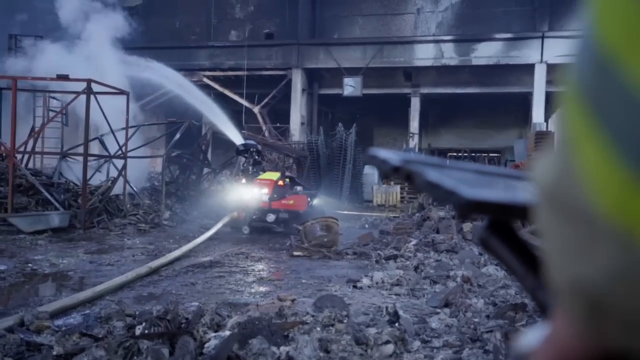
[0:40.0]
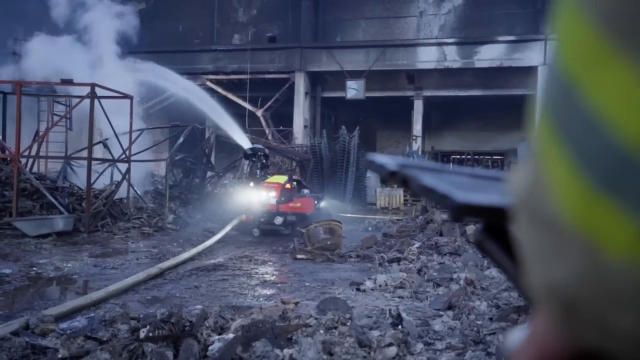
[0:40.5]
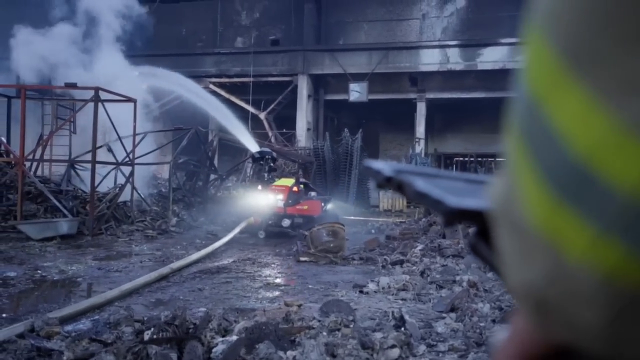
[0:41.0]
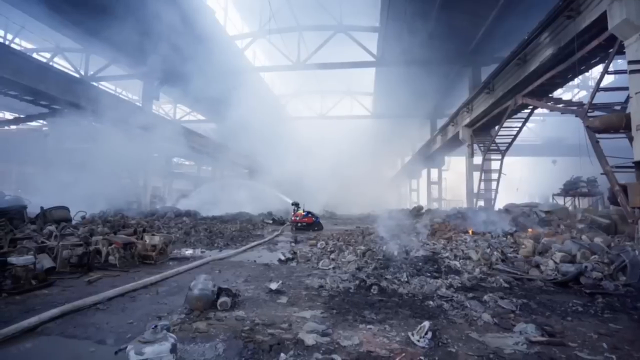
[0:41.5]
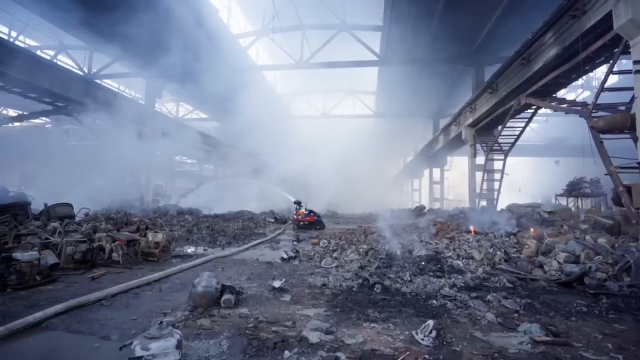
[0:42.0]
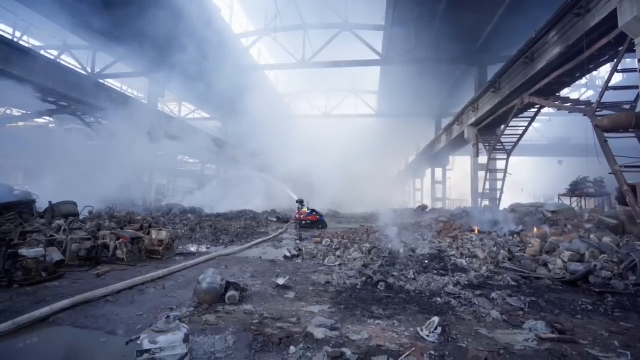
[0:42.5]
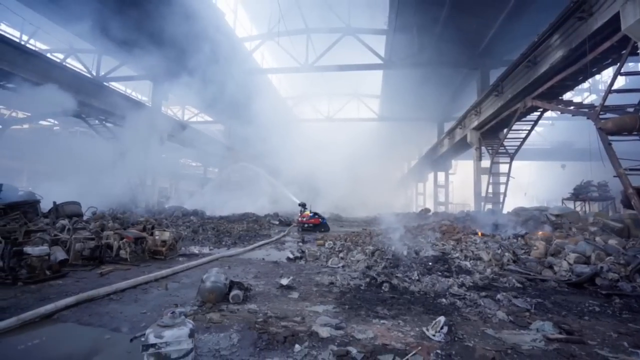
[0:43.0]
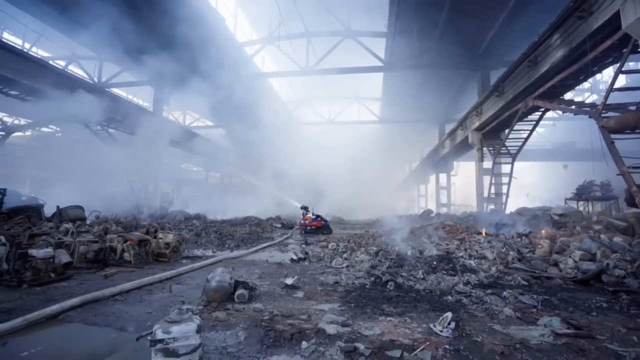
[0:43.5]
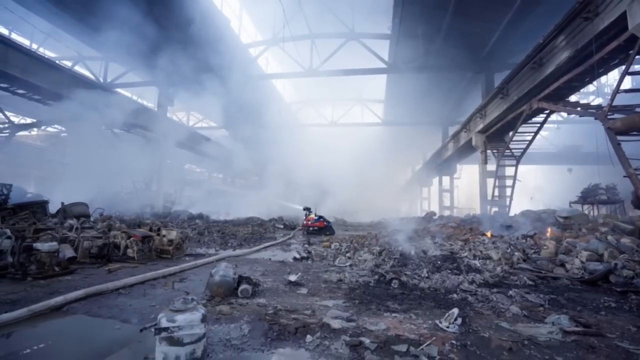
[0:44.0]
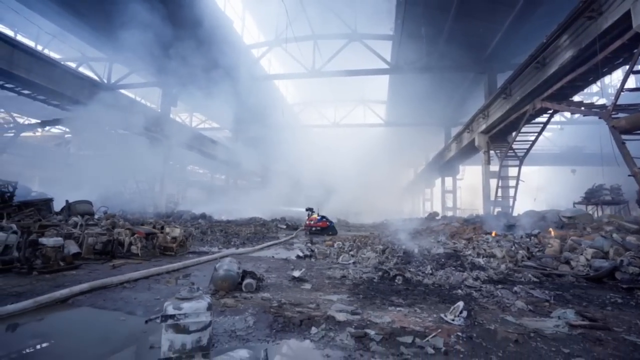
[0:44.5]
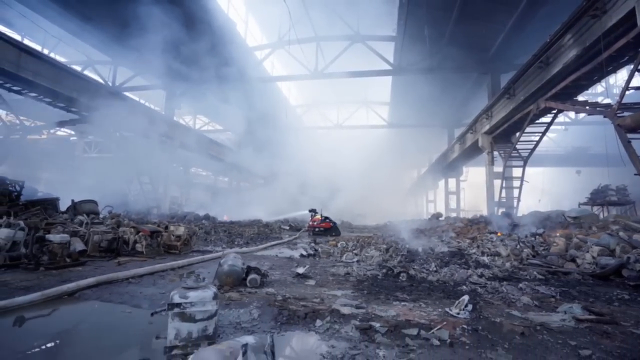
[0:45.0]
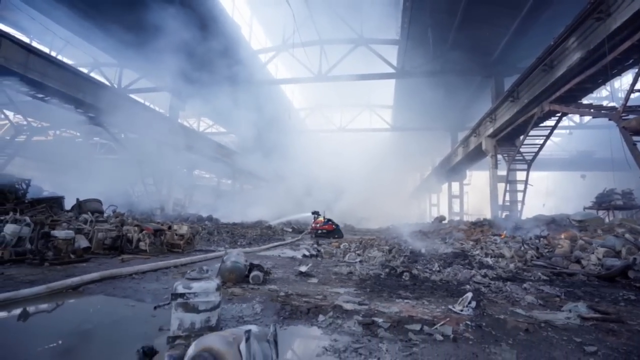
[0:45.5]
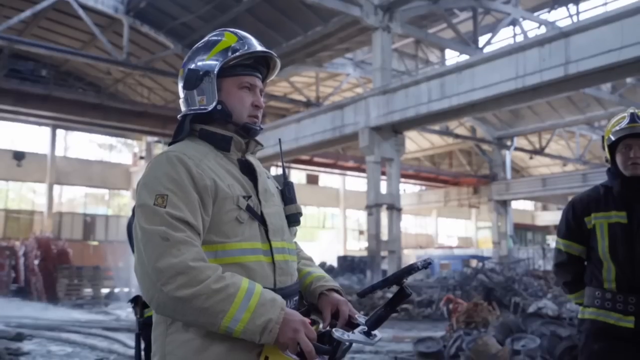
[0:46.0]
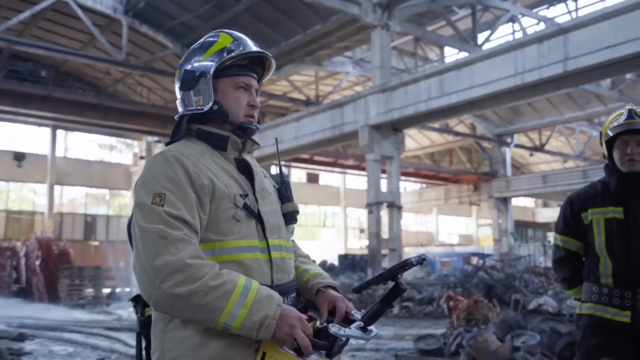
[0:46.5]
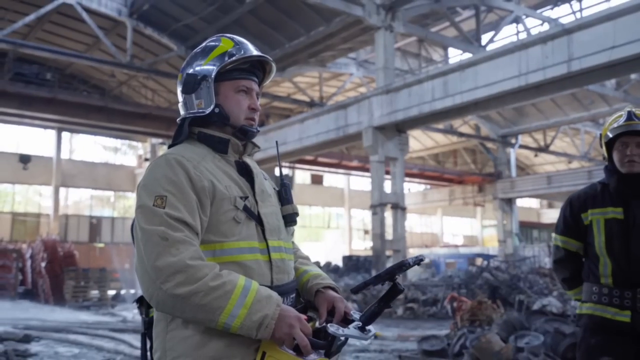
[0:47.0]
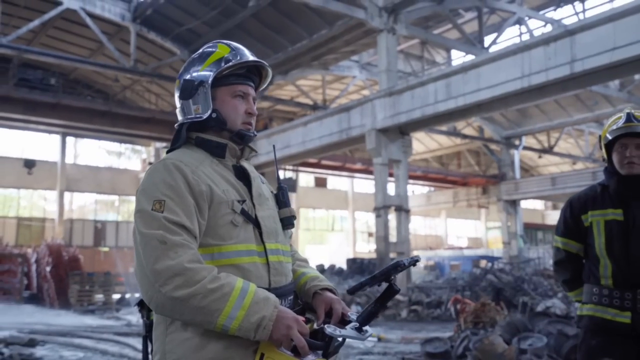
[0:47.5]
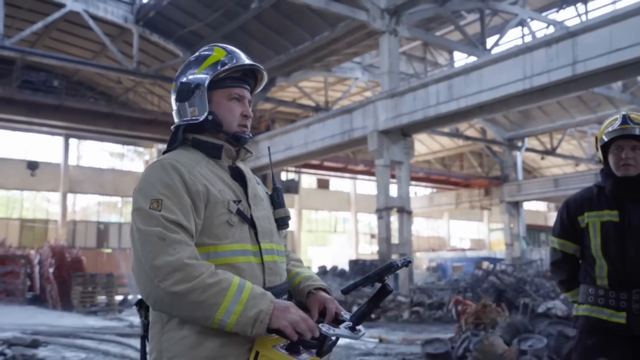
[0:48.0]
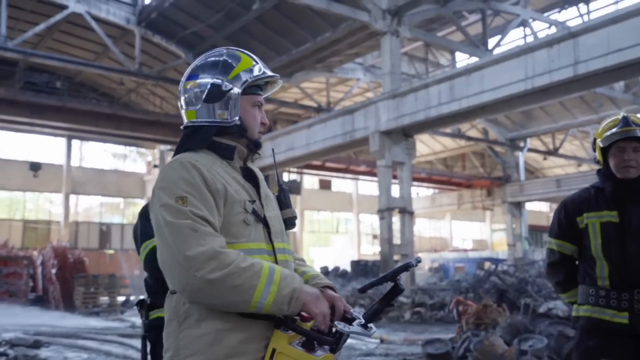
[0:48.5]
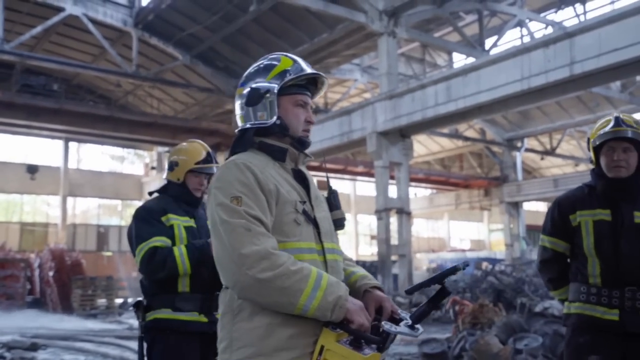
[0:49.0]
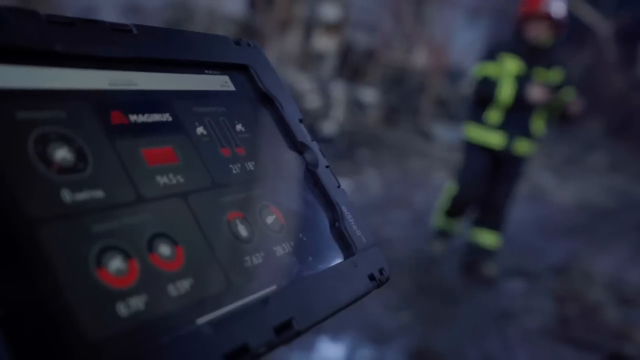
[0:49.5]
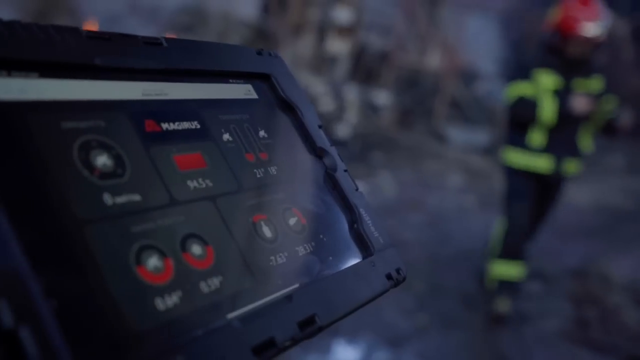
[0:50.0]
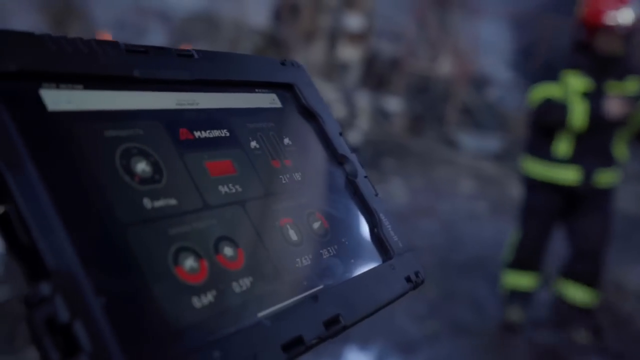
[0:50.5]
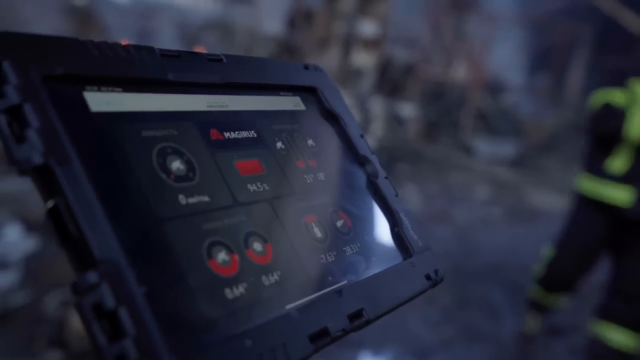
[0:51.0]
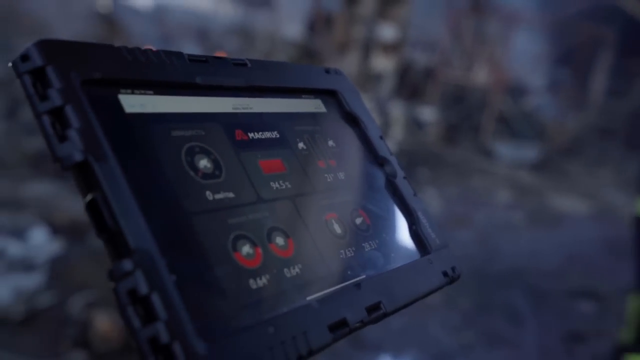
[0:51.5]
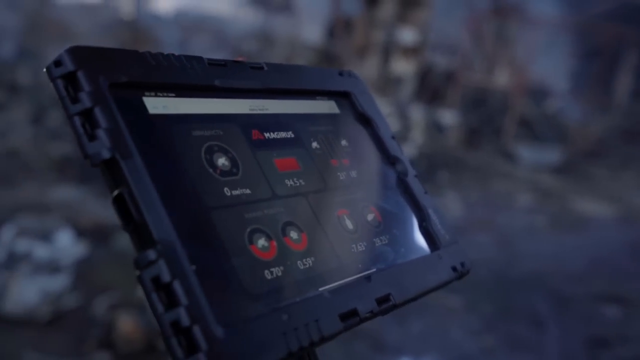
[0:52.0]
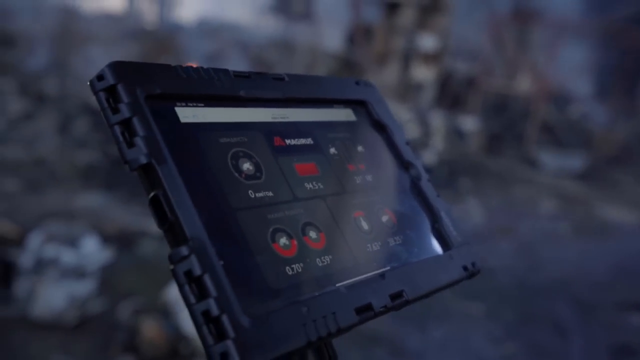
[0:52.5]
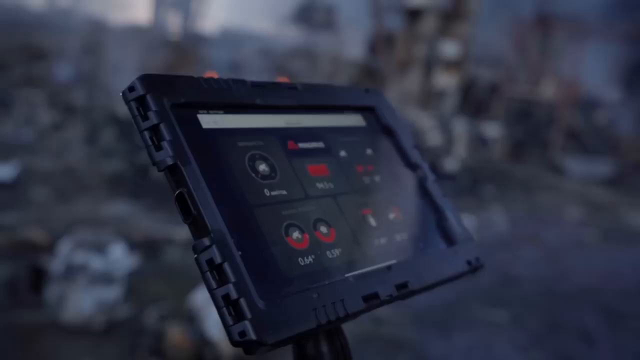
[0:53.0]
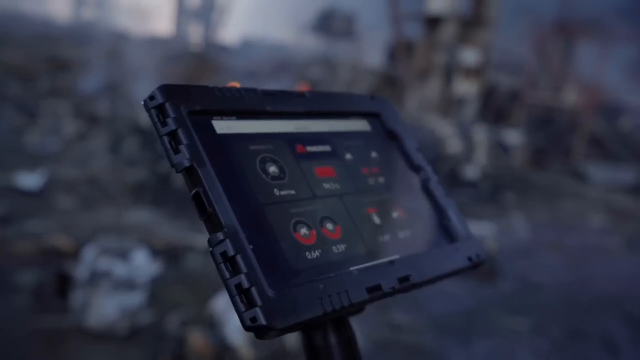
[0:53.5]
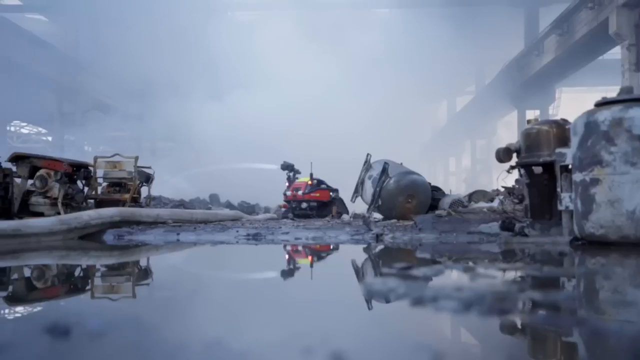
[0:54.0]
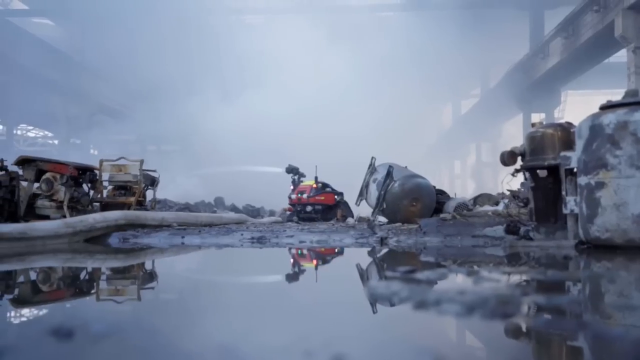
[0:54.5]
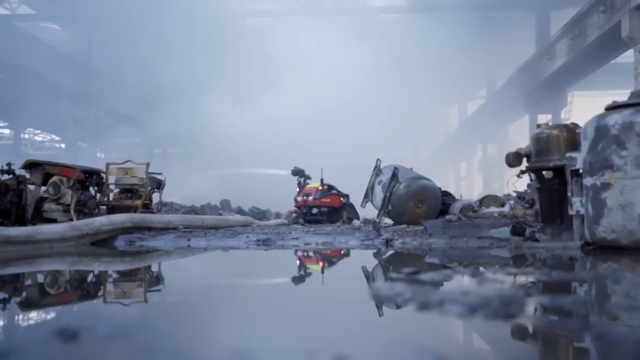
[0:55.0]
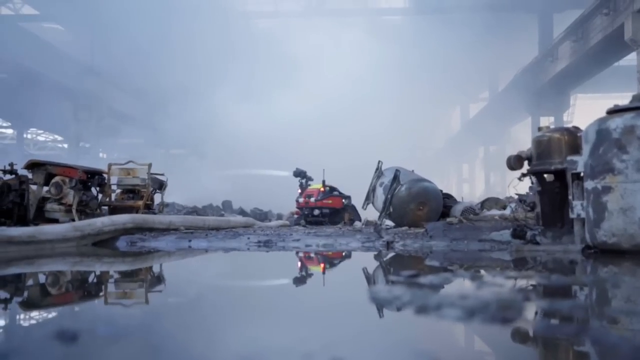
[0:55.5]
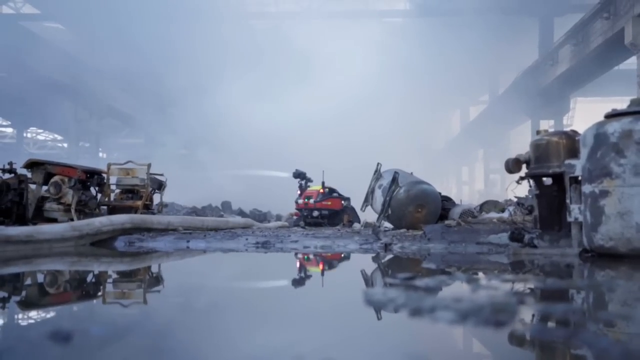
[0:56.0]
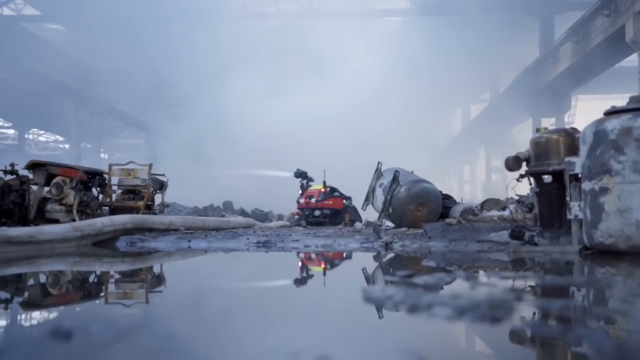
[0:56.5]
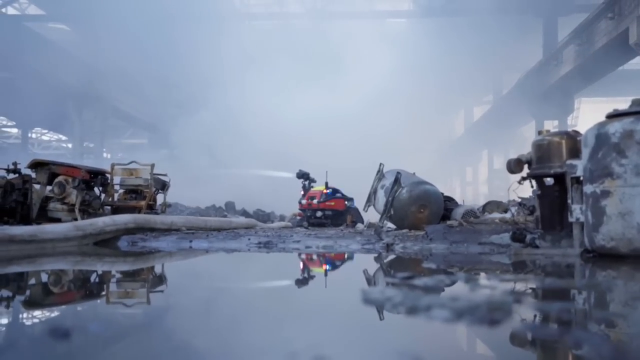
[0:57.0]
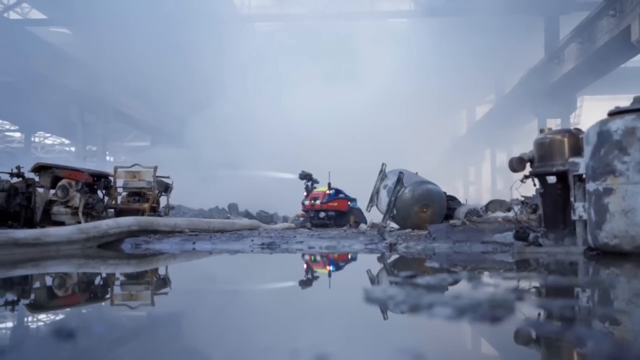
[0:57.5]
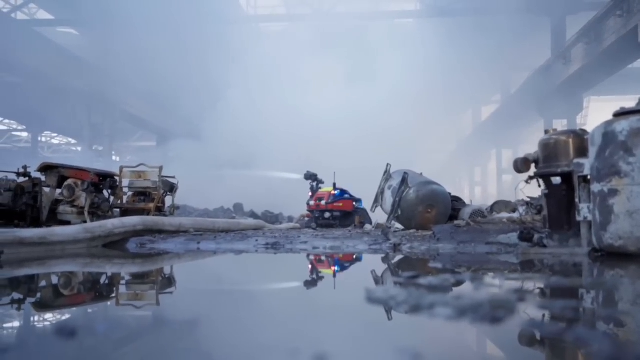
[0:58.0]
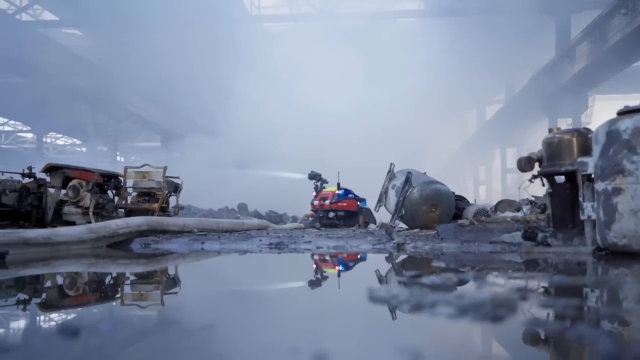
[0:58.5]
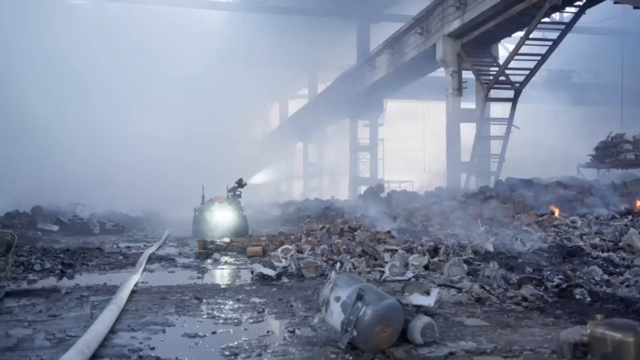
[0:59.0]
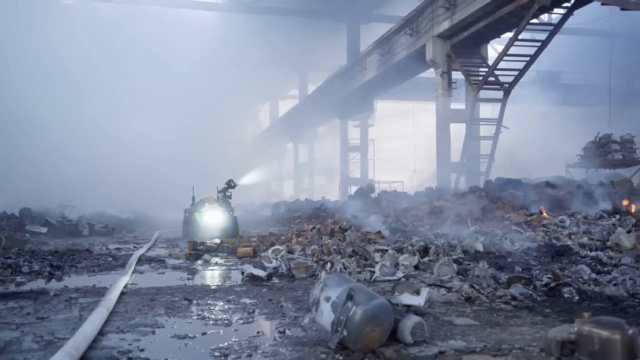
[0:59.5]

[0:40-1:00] At the fire site, a stain from smoke is visible on one of the walls, and there are pools of water everywhere. The individual holds a controller, directing the machine where to go and where to sprinkle water. A small bit of fire is still visible. The site is quite wide and might be an industrial area or a factory. The fire appears virtually out, and personnel of the fire emergency service are hanging around.